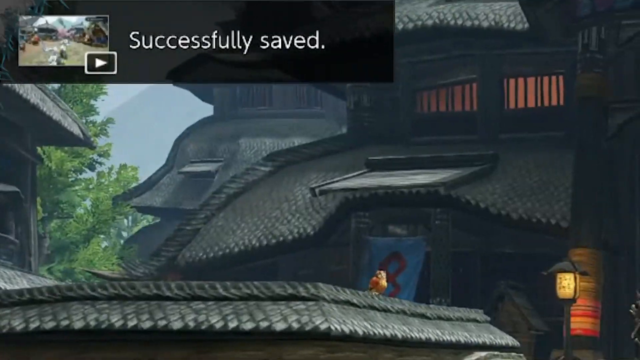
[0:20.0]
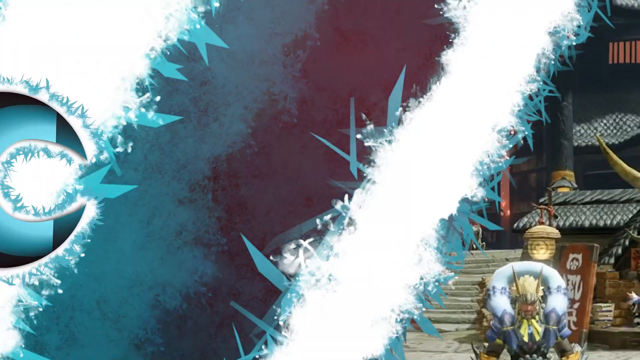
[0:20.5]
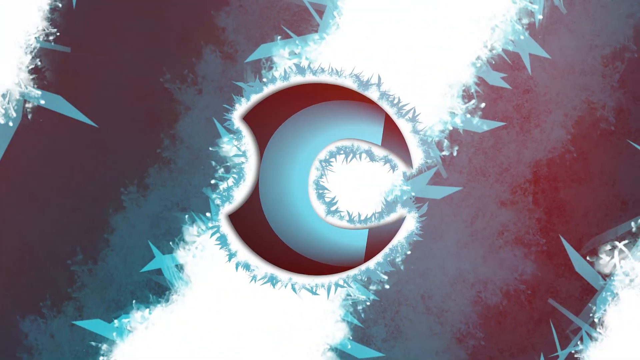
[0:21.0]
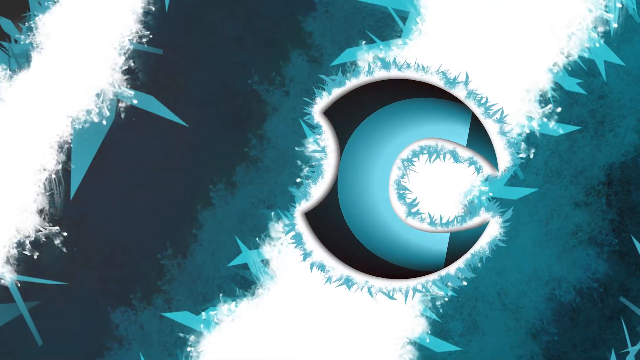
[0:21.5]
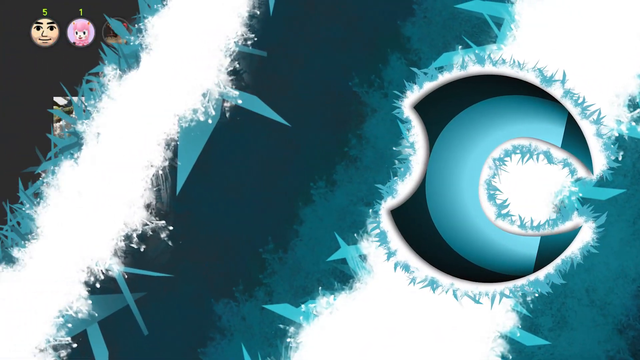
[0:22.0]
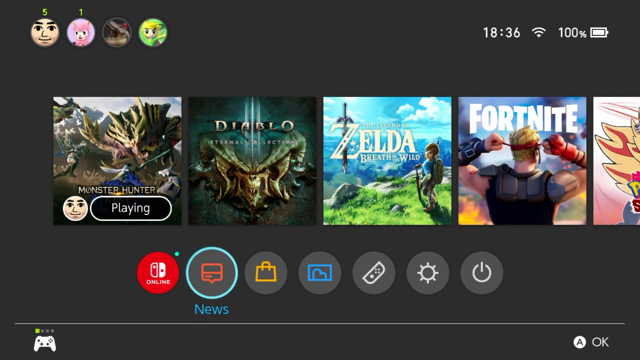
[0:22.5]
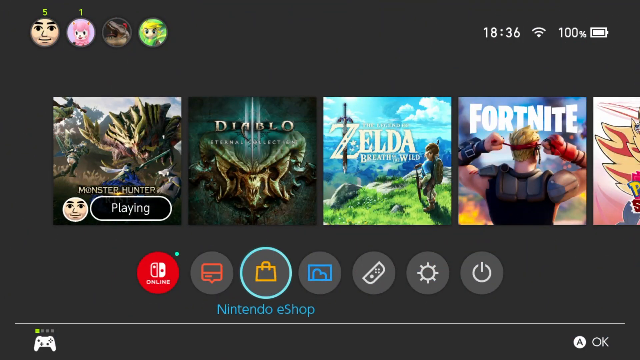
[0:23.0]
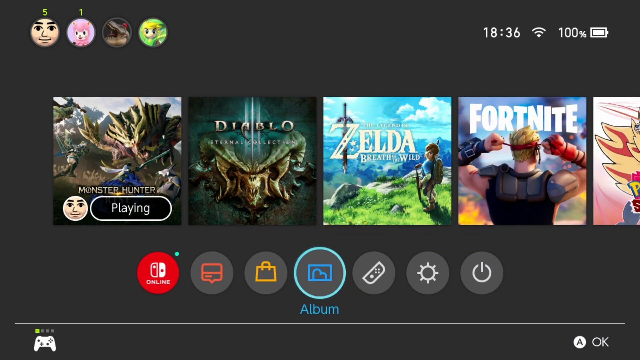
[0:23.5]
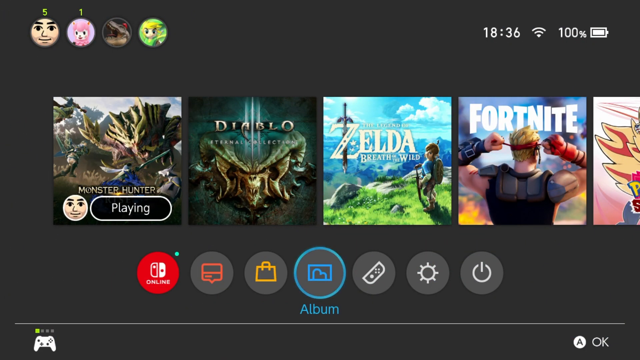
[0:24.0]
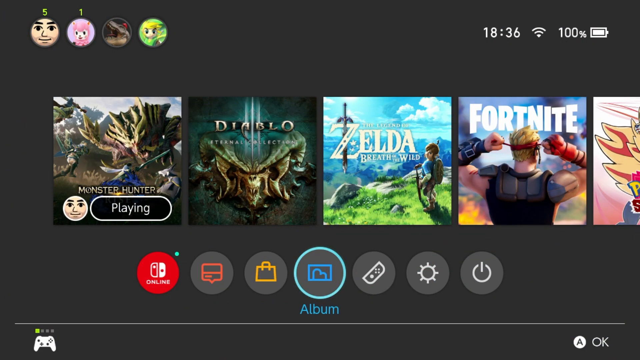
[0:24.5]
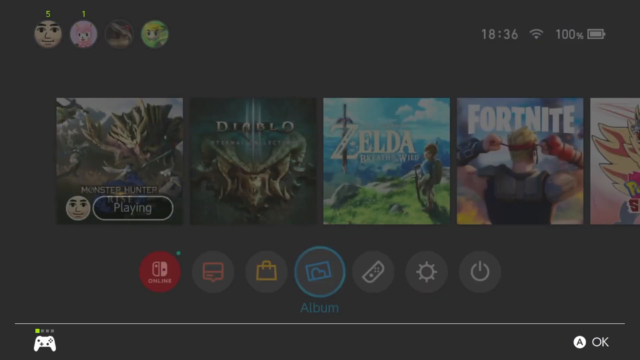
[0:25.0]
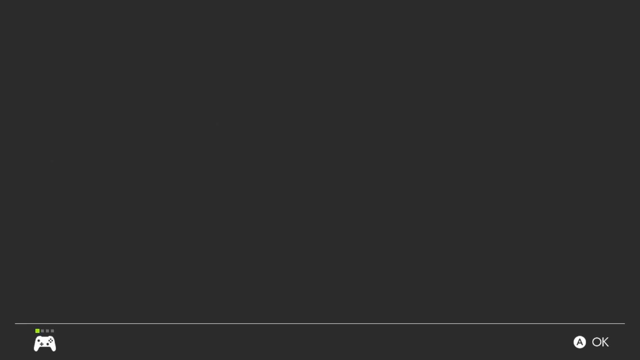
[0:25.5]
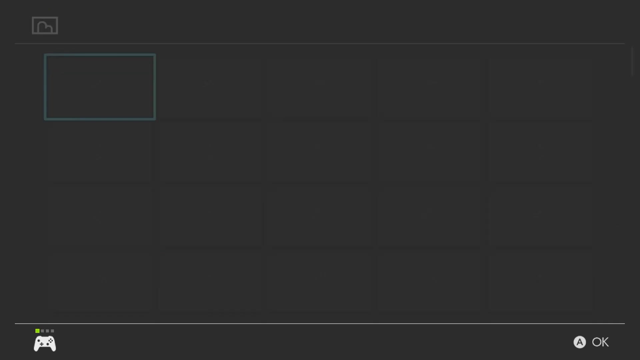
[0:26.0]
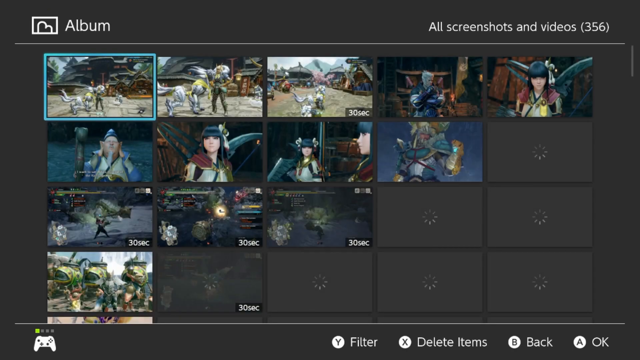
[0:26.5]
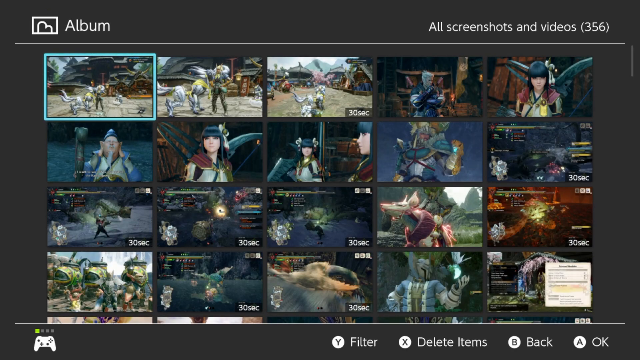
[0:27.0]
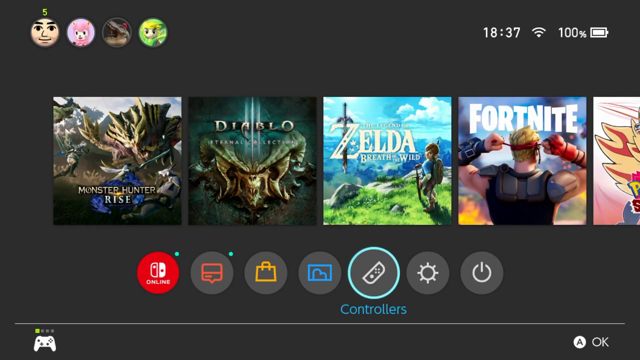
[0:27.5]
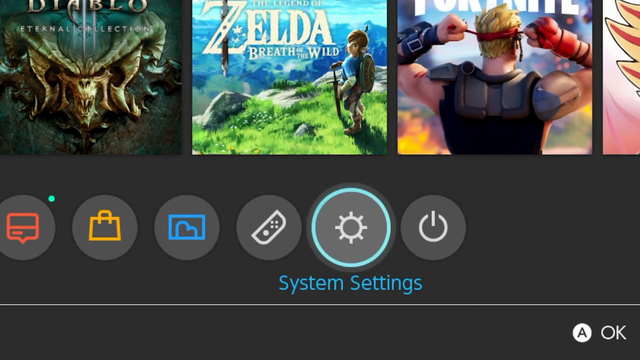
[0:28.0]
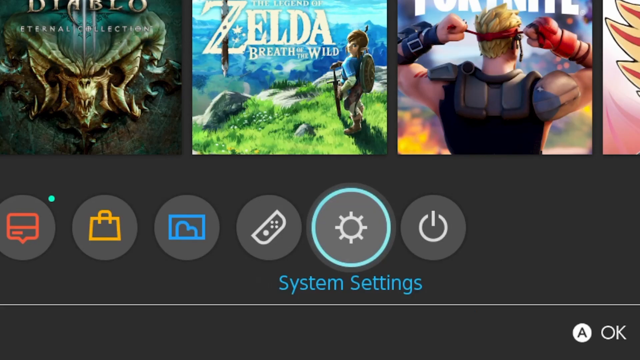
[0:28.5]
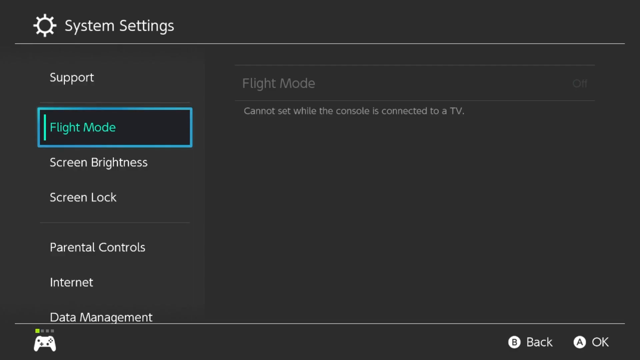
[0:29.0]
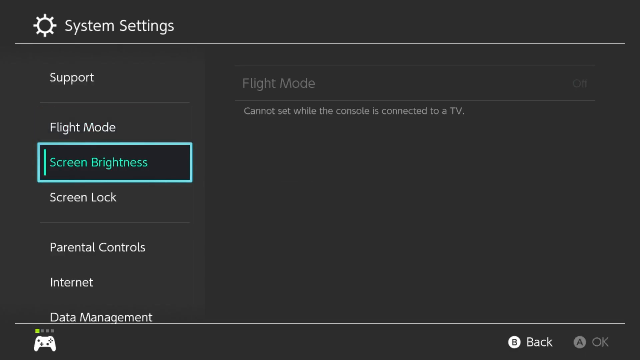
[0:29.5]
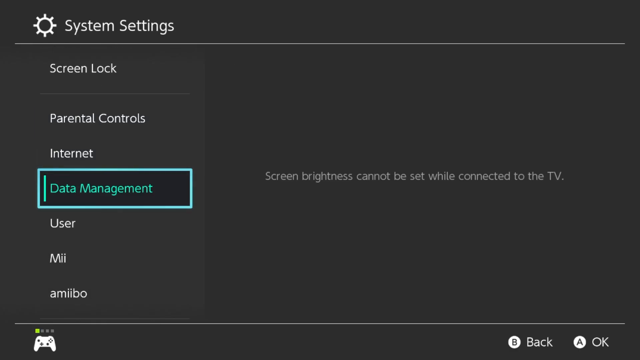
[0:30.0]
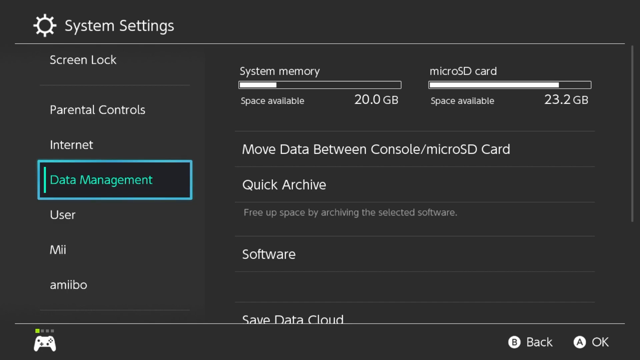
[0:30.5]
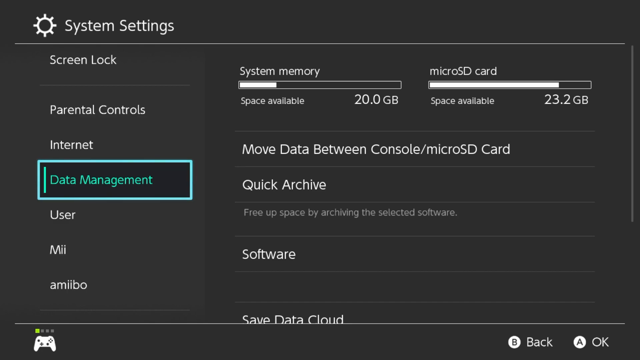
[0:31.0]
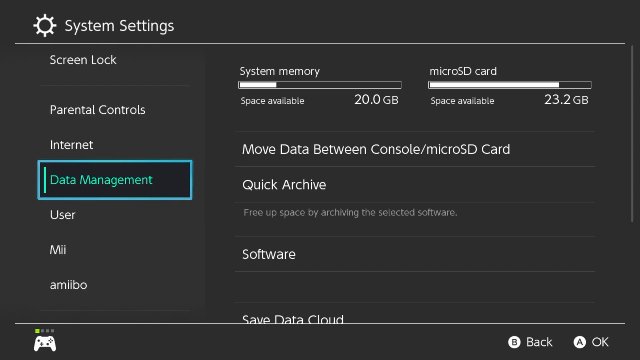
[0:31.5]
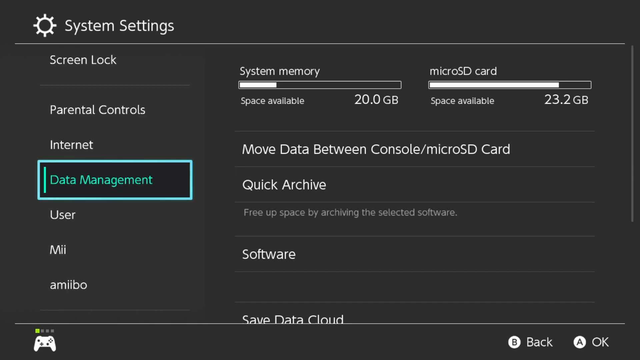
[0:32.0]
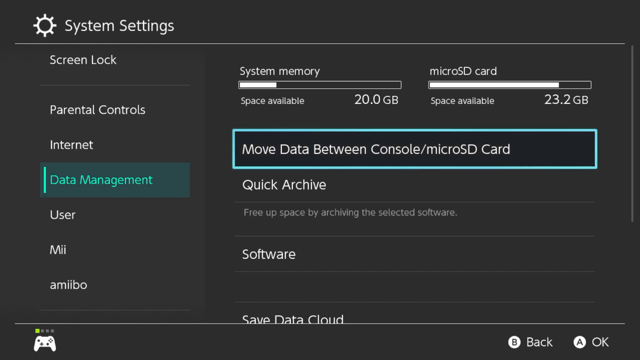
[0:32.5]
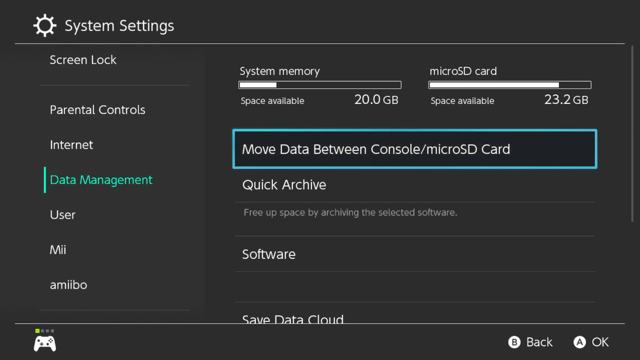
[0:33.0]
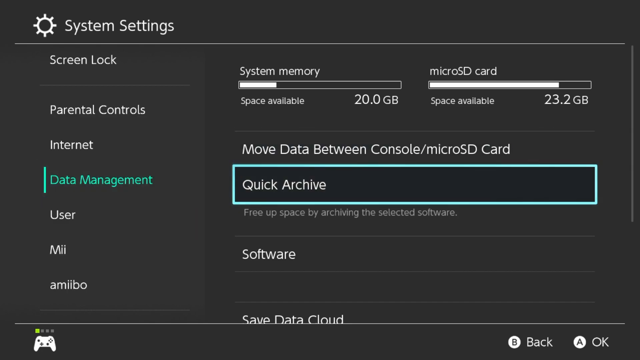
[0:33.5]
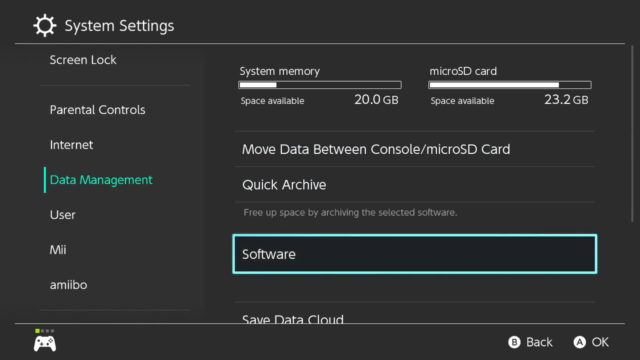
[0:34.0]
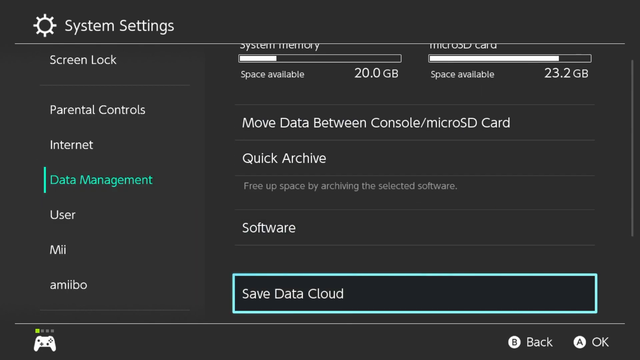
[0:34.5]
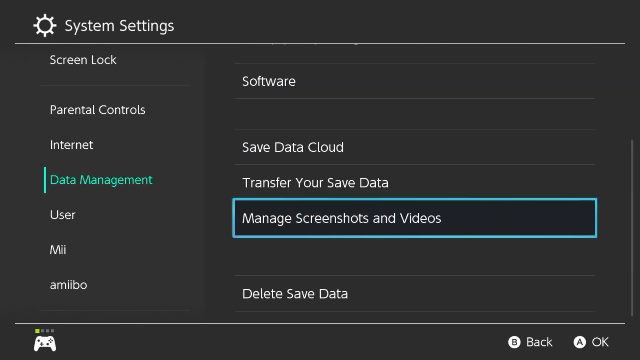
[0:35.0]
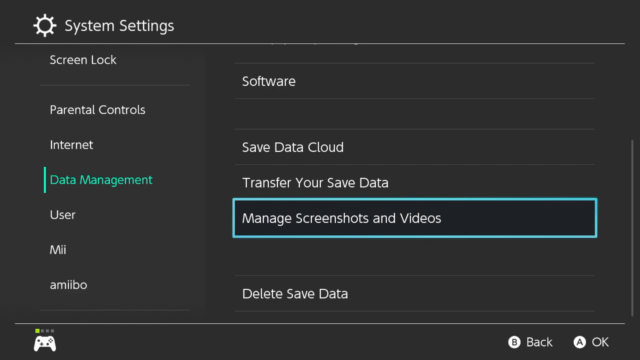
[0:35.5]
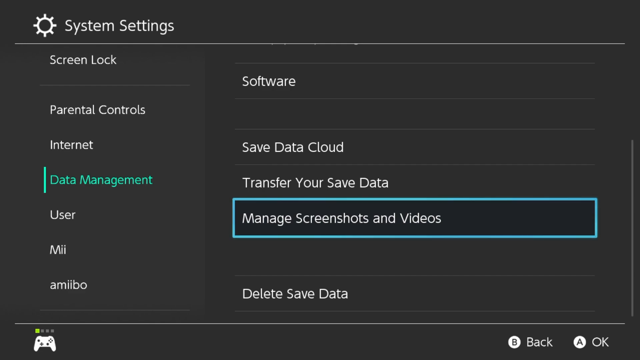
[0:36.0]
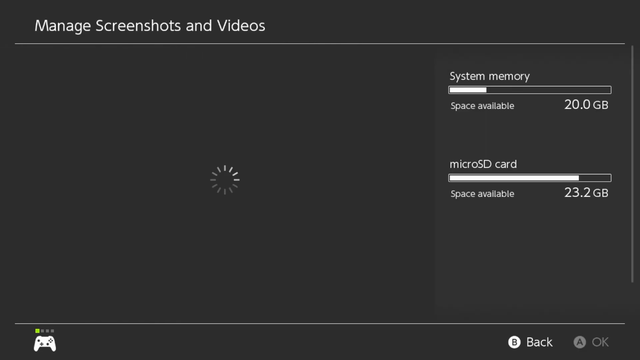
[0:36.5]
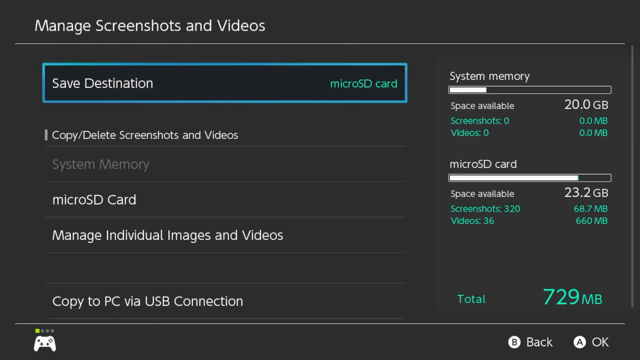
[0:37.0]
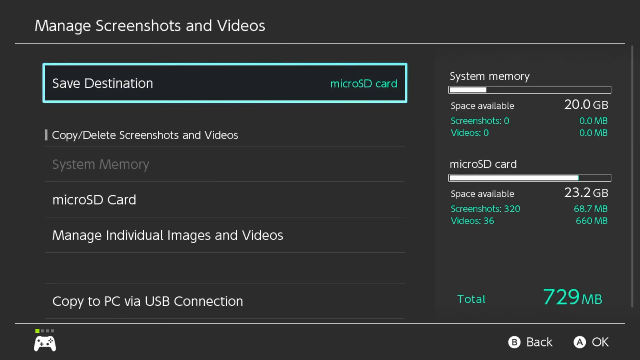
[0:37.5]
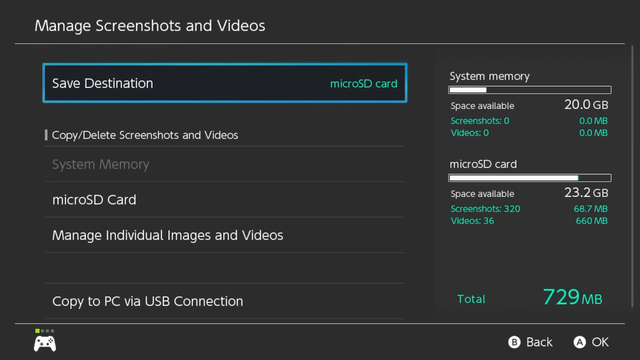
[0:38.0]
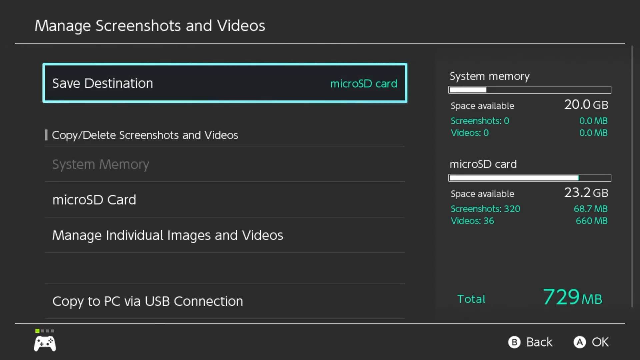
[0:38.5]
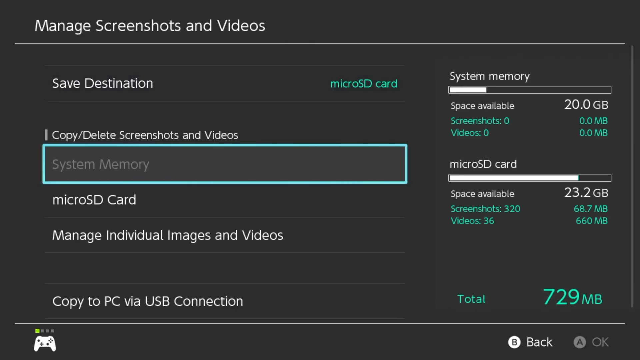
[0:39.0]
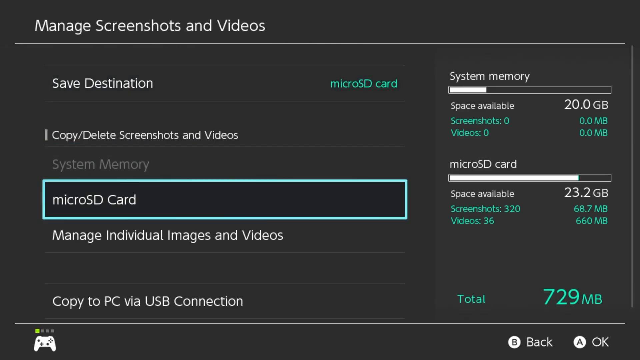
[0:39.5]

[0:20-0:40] A transition appears over the video and the game disappears, replaced by the Switch home screen. There are four player accounts, the time is 18:36, Wi-Fi is on, and the battery is at 100%. The game currently being played is Monster Hunter Worlds, and a couple of other games are visible: Diablo, Zelda Breath of the Wild, Fortnite, and a Pokemon game that is possibly Pokemon Sapphire. At the bottom are the different Nintendo Switch options, which the user scrolls through: Nintendo Online, messages, the Nintendo eShop, the album. The user clicks the album, and for a split second gameplay images pop up. They close it and go into system settings, scroll down to data management, move over to other options, and scroll down to manage screenshots and videos.